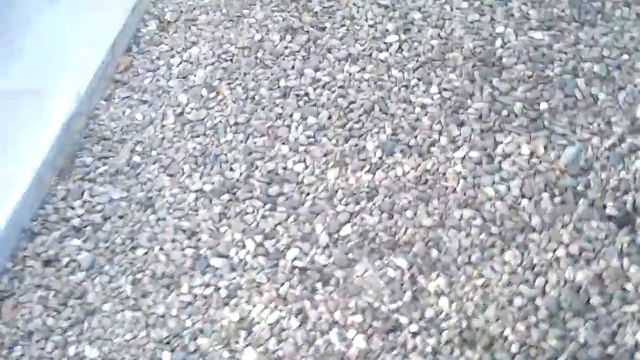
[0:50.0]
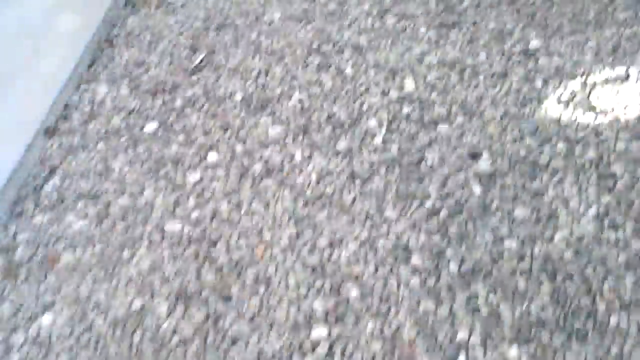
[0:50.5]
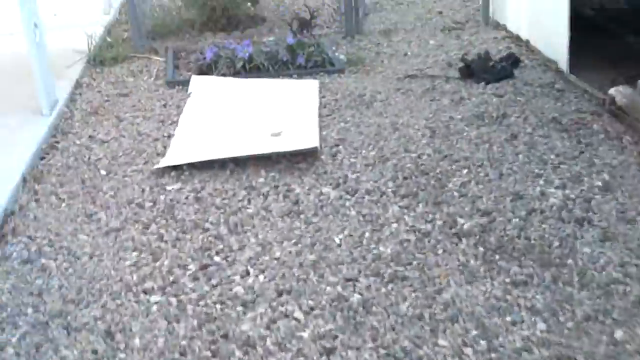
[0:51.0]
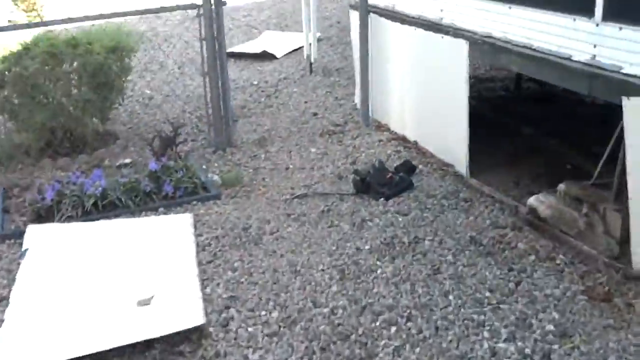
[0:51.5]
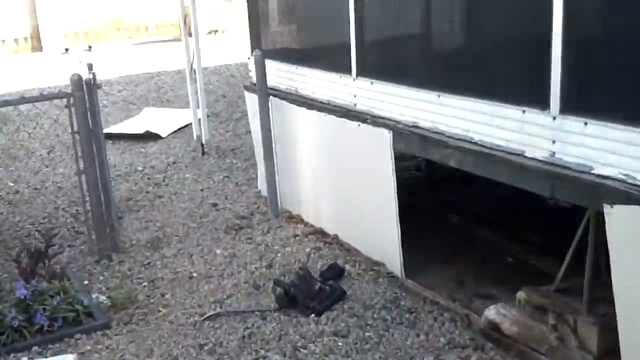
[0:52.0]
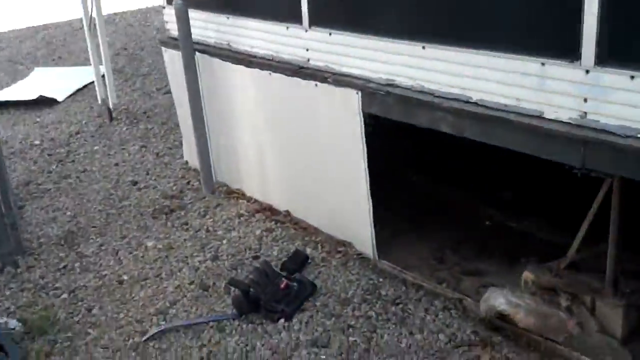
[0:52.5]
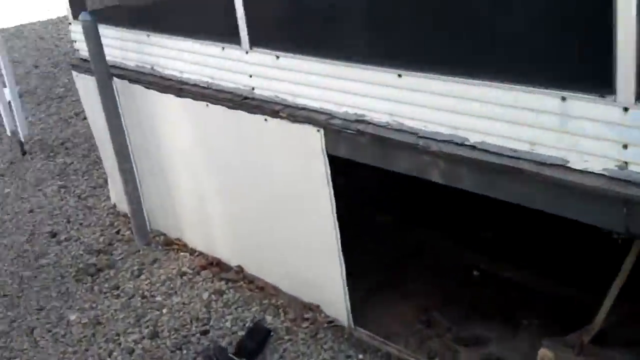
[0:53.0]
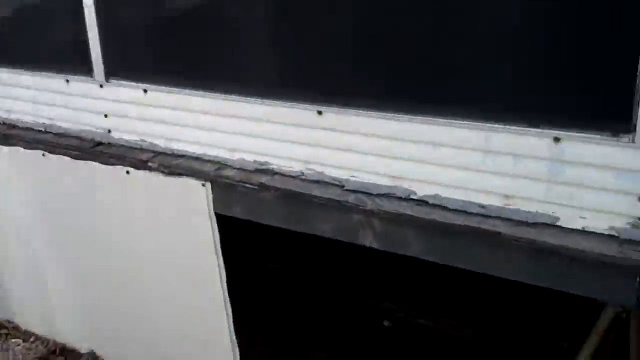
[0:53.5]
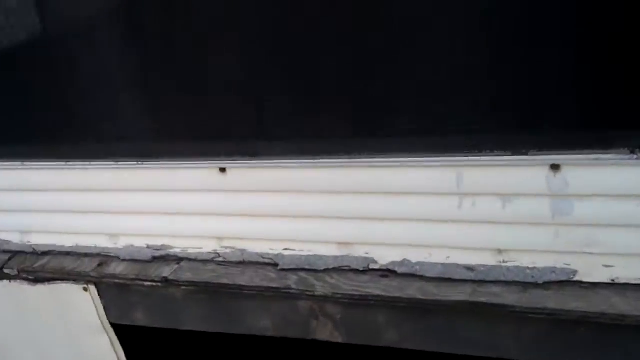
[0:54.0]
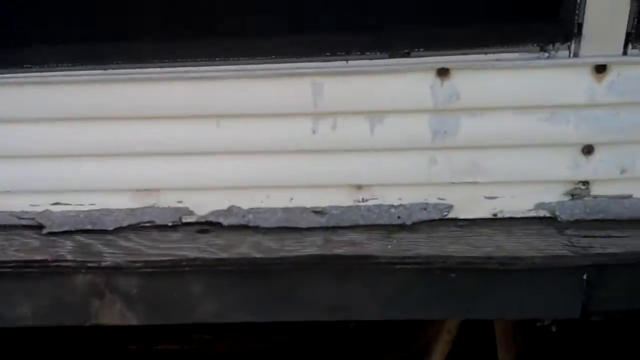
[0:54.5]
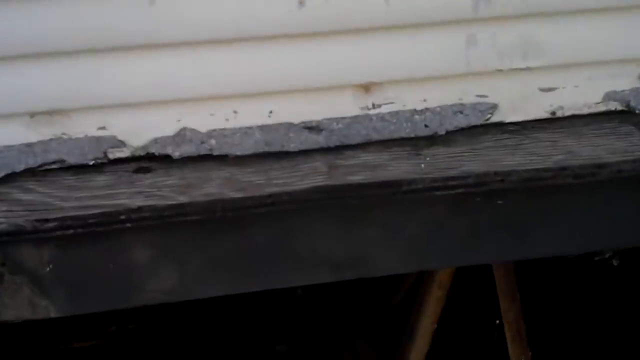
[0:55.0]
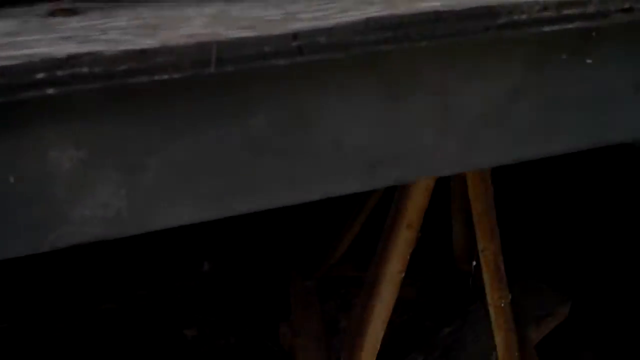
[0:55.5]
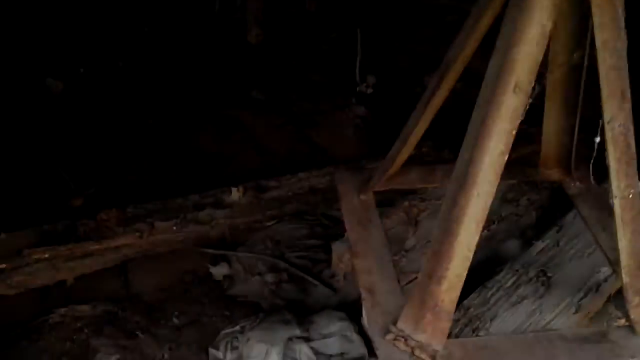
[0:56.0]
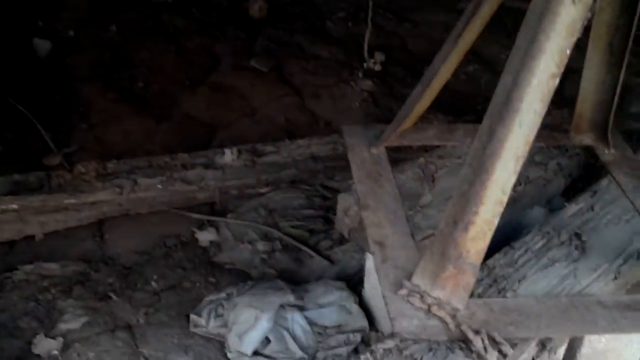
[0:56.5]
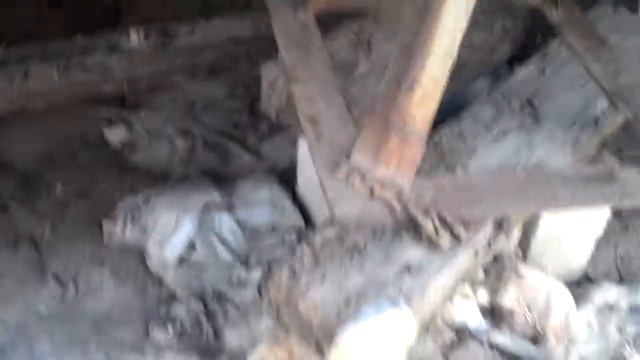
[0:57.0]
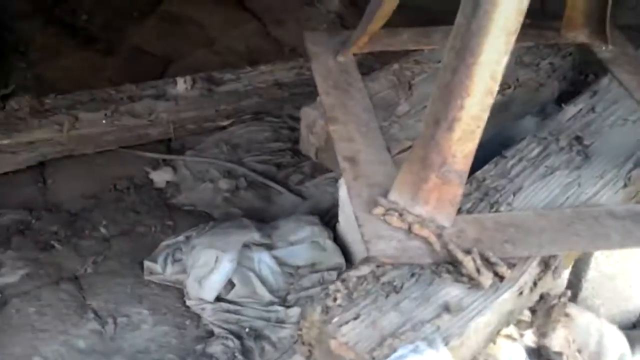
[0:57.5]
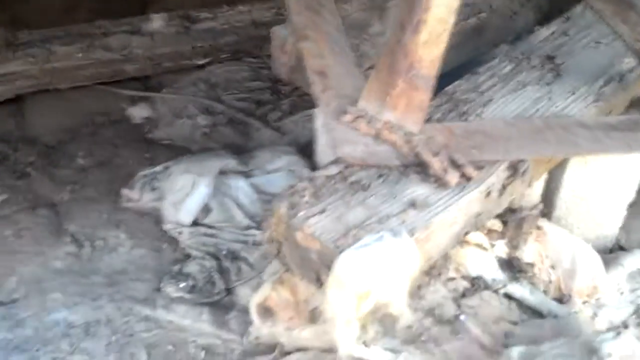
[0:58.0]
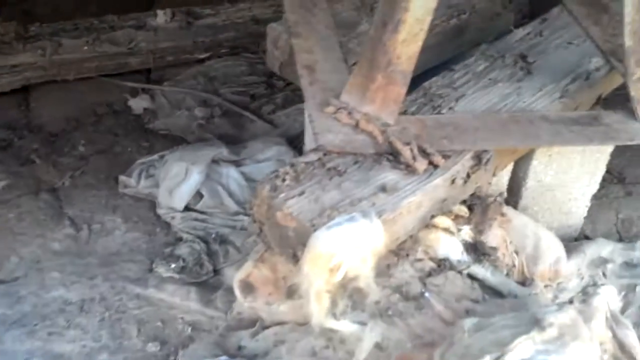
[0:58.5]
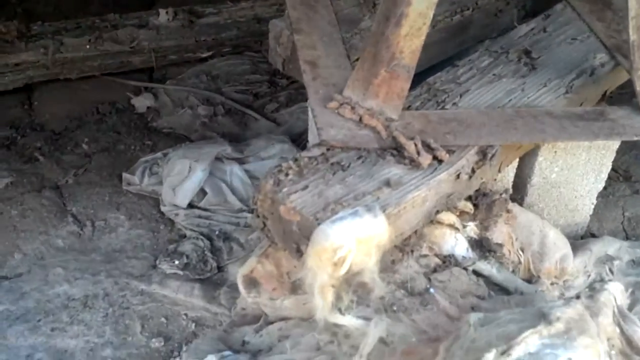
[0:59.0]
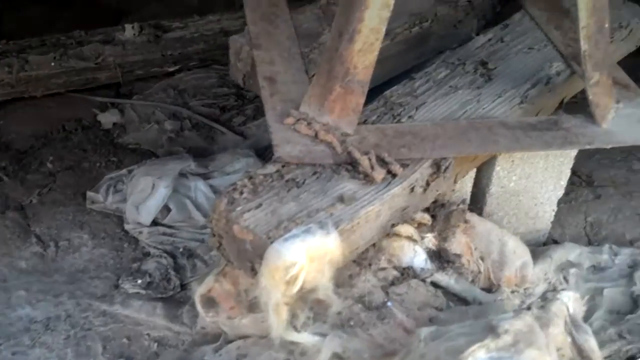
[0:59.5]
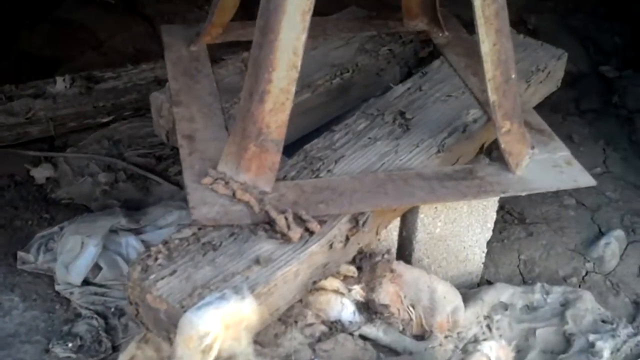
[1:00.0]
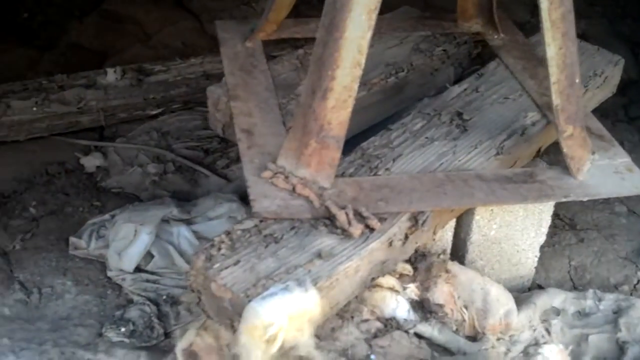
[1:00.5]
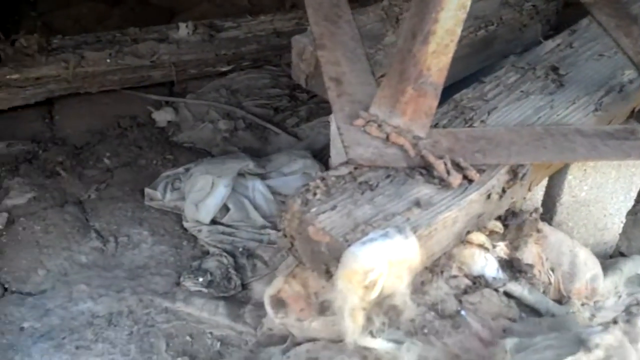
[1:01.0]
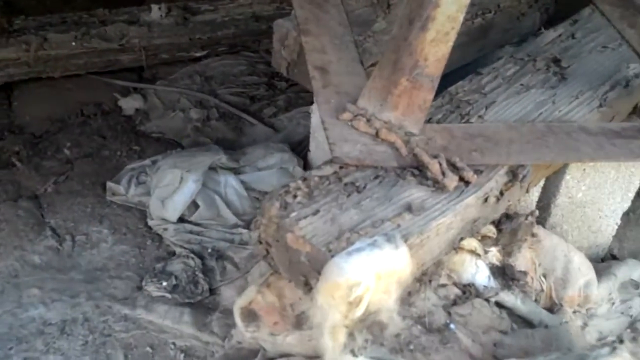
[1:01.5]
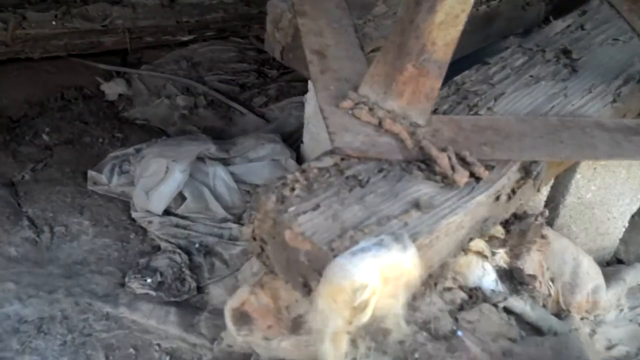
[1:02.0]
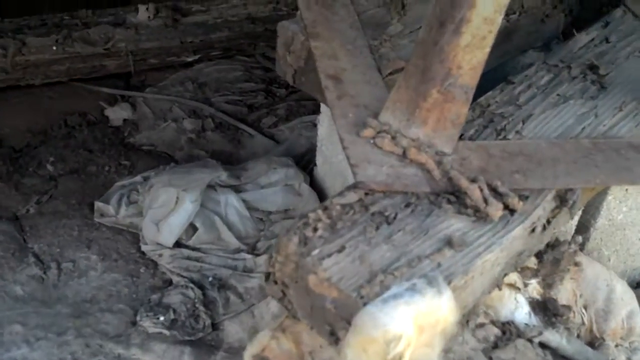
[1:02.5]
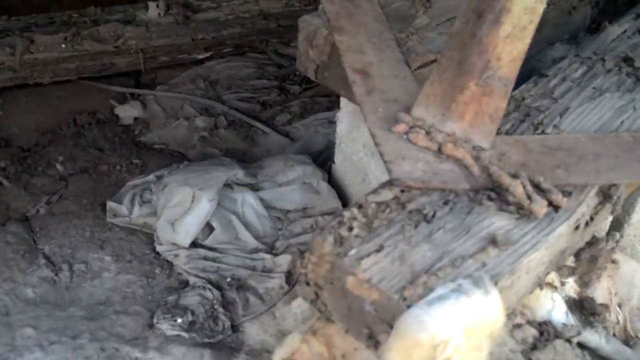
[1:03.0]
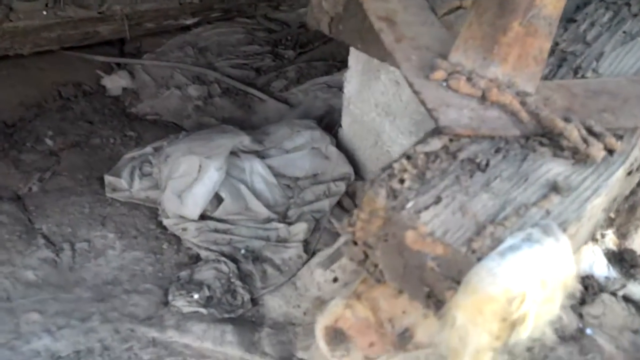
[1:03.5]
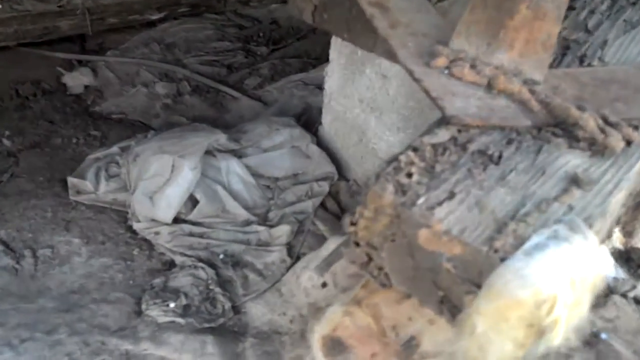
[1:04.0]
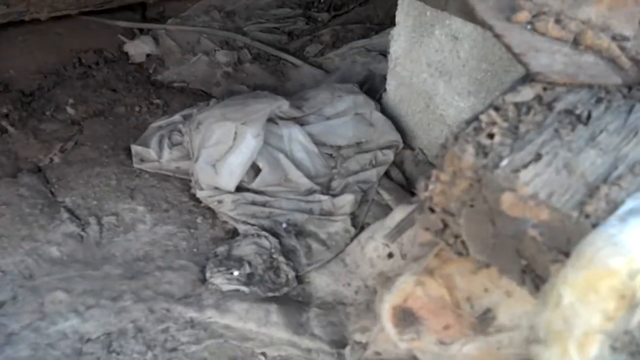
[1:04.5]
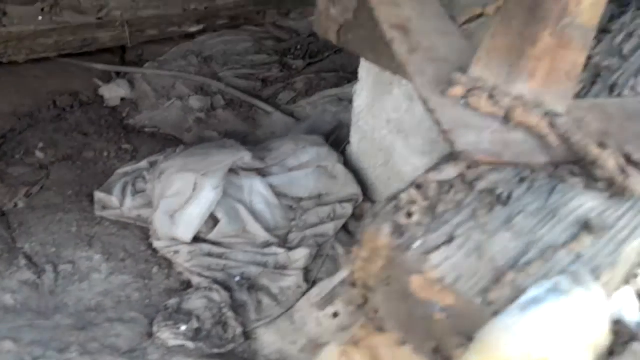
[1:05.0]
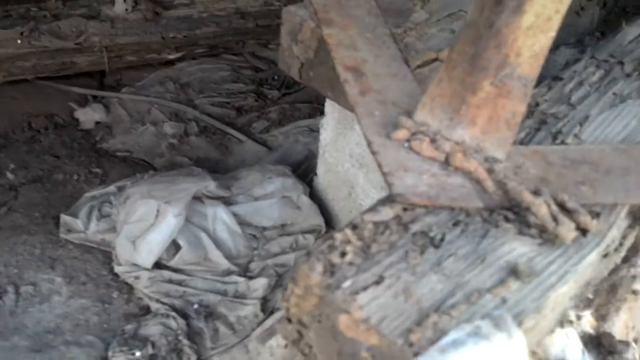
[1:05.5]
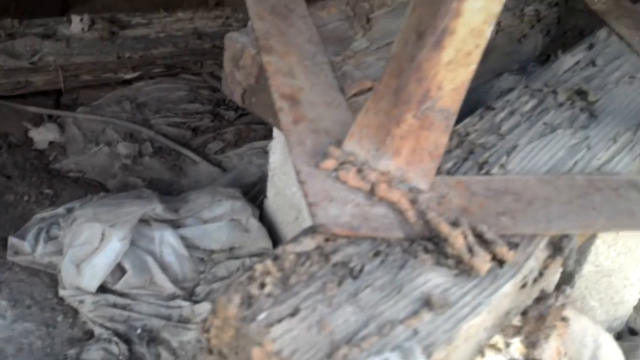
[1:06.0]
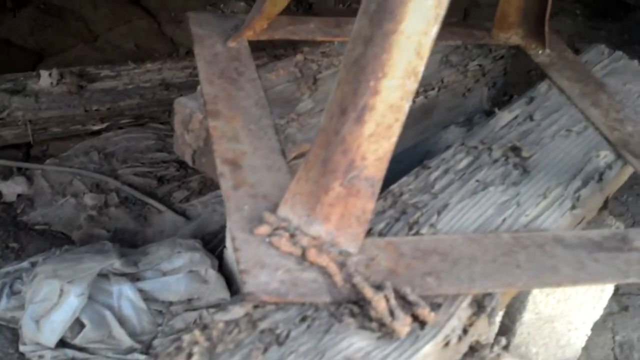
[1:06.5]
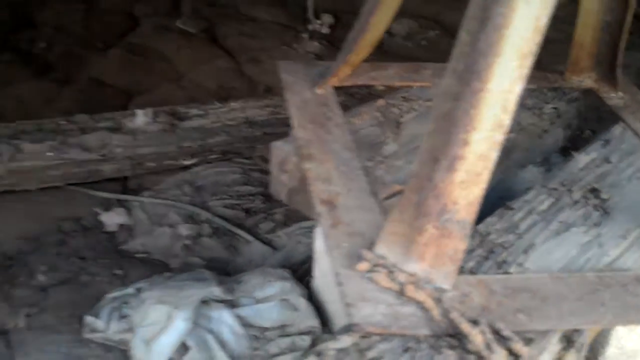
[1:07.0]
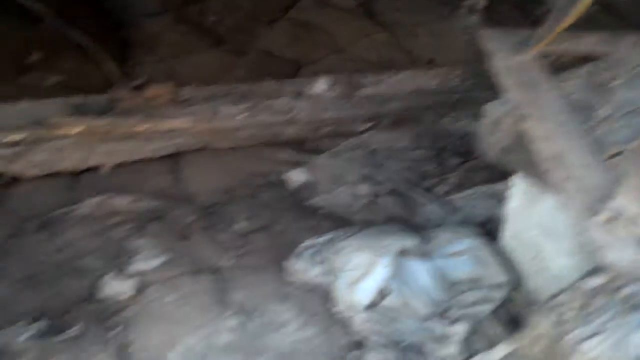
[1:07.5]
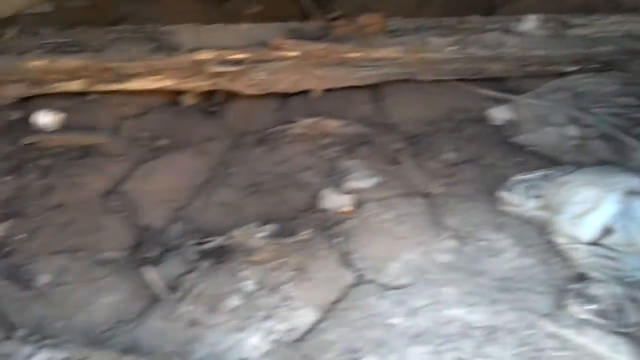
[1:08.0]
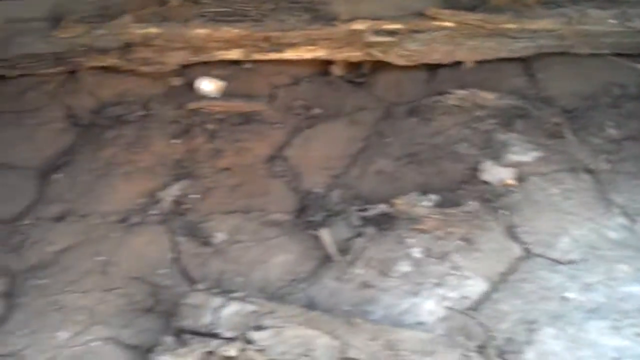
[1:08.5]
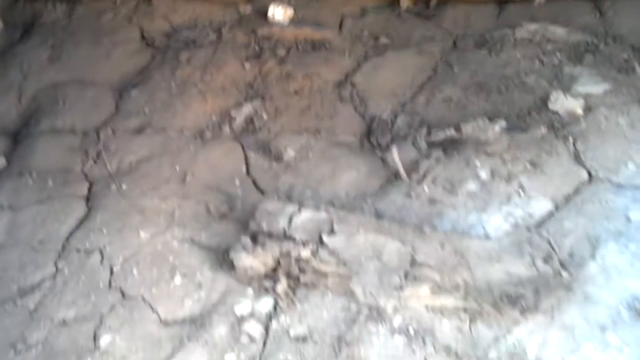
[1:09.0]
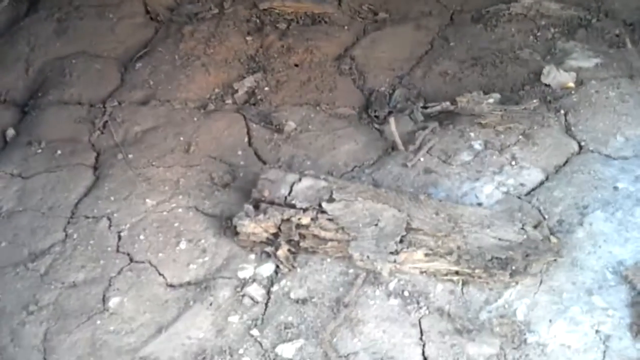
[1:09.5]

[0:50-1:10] The camera follows the asphalt or gravel over to what looks like another crawl space opening in a similar condition. While walking along the gravel, a chain-link fence running toward the backyard and a bush are visible. The landscaping is very basic, and the gravel is in lighter grays and tans. Some white board, apparently a very flimsy board that covers these openings, has been pulled away, and the white sheet lies on the ground in the background. The shot shows lots of decaying wood, some rags on the floor, wood or steel tripods, and cracked dirt underneath. An extreme close-up shows the frame on the top, then the camera focuses more on the inside. The wood looks decayed, and something may have gnawed or chewed through it, possibly a creature or animals.